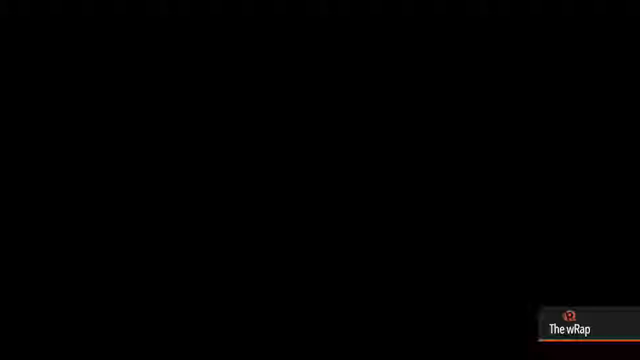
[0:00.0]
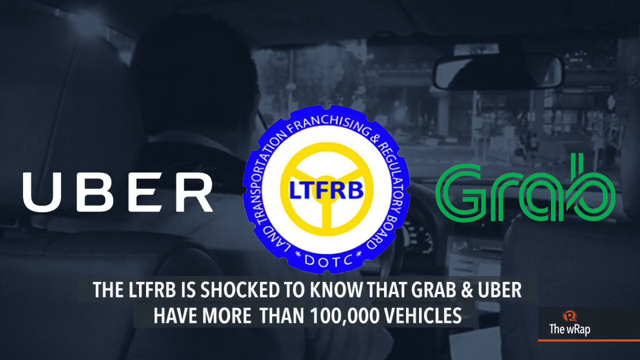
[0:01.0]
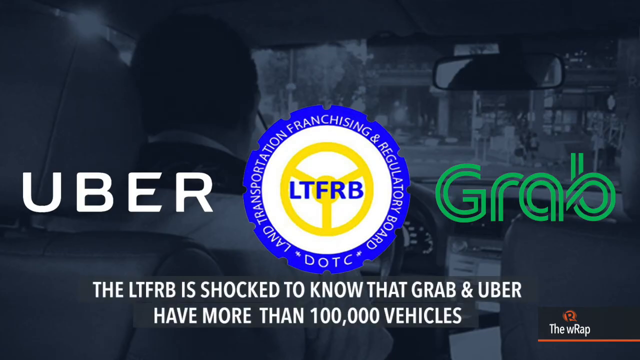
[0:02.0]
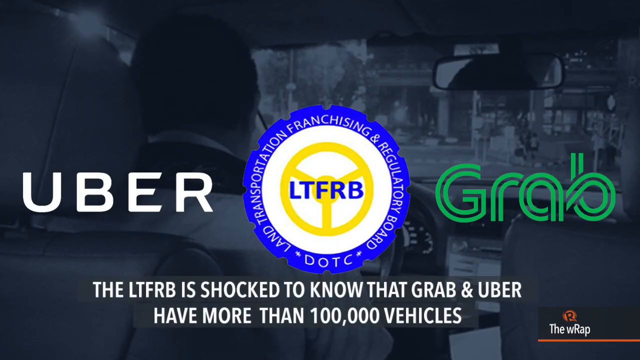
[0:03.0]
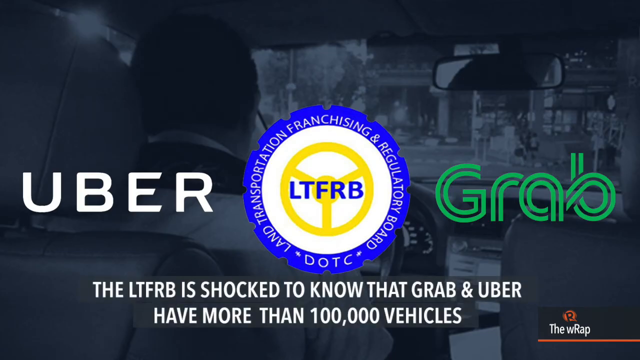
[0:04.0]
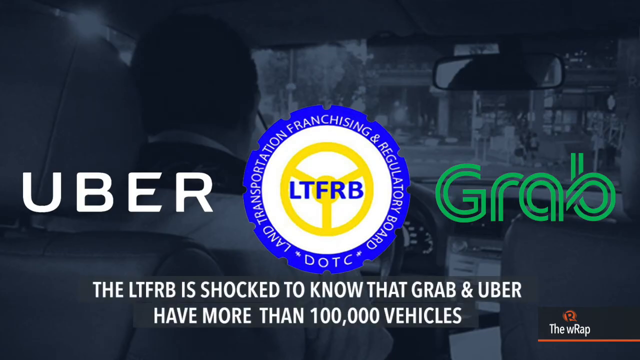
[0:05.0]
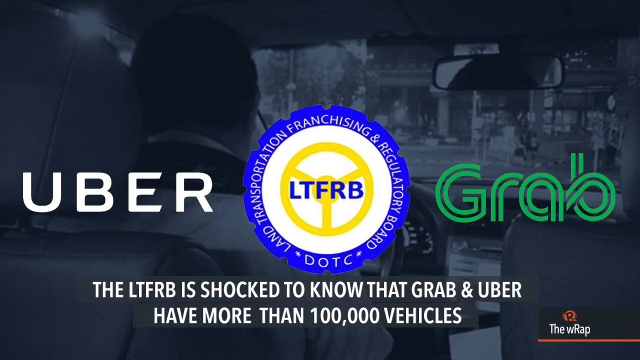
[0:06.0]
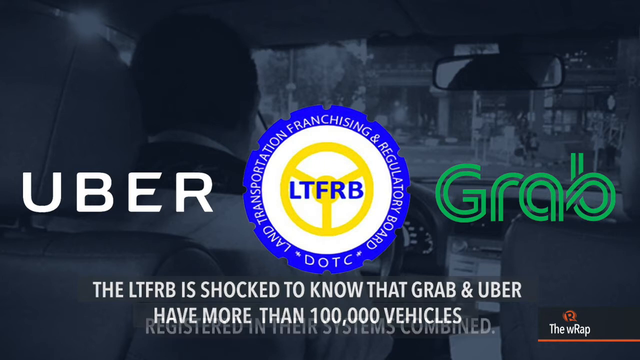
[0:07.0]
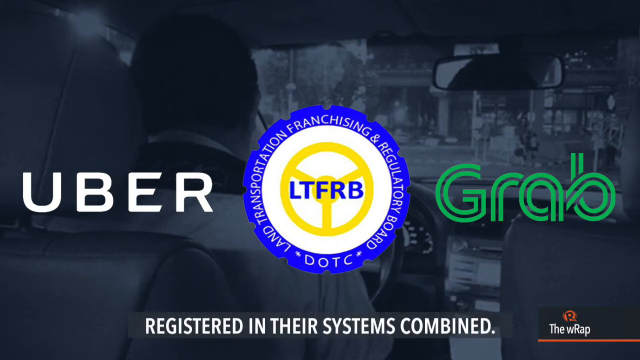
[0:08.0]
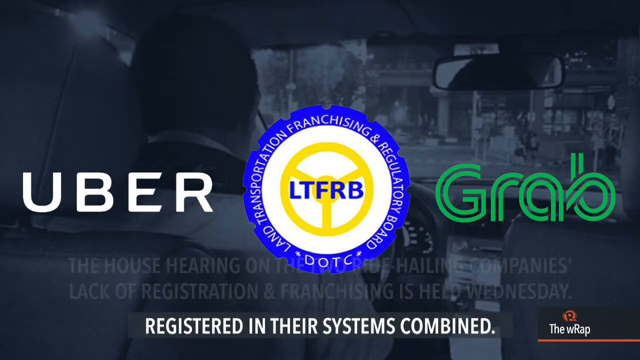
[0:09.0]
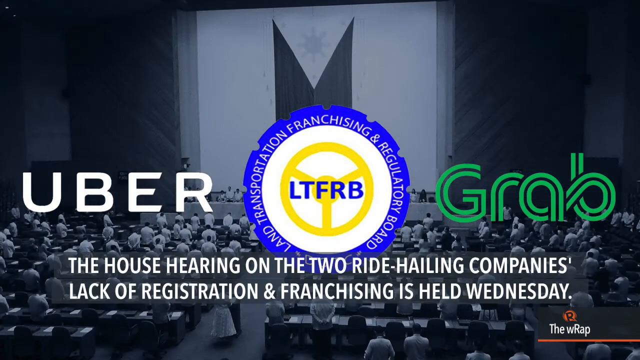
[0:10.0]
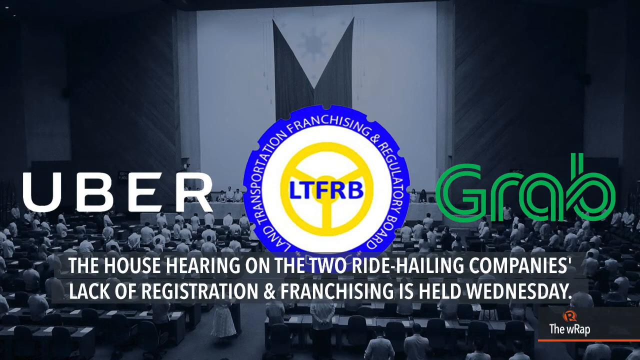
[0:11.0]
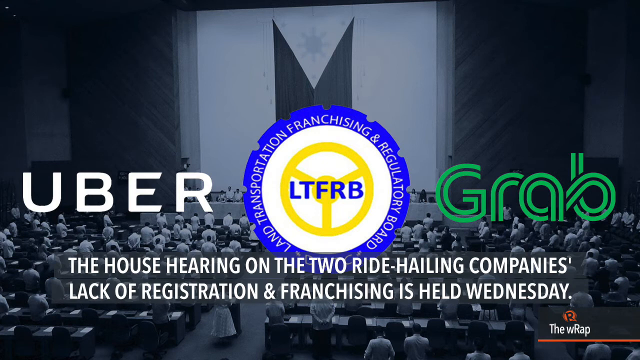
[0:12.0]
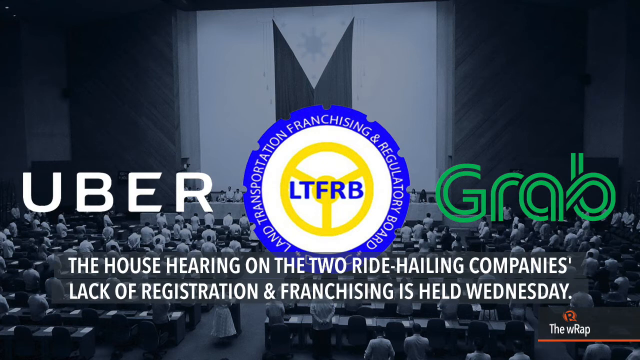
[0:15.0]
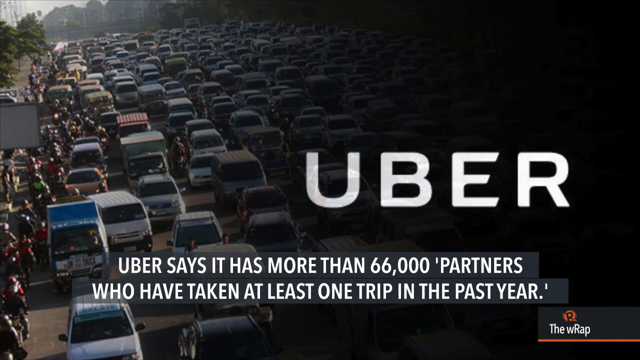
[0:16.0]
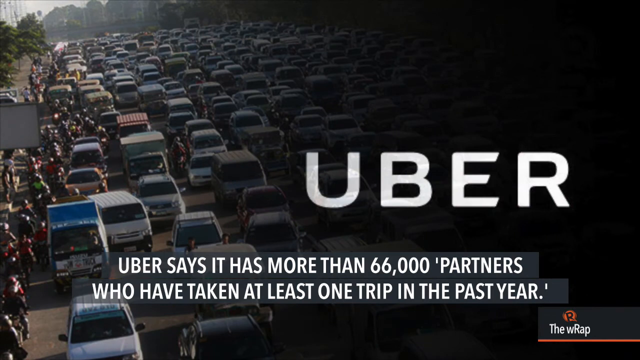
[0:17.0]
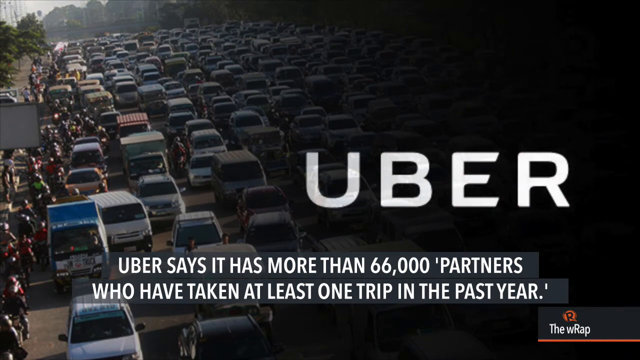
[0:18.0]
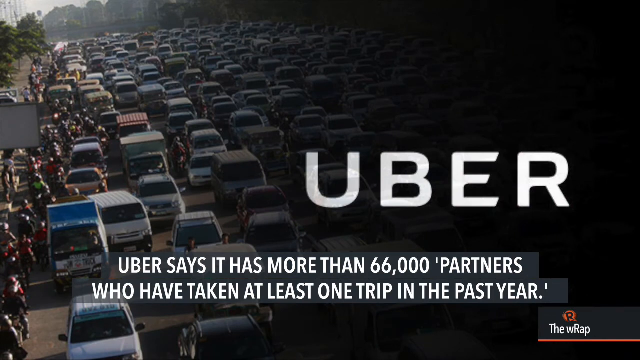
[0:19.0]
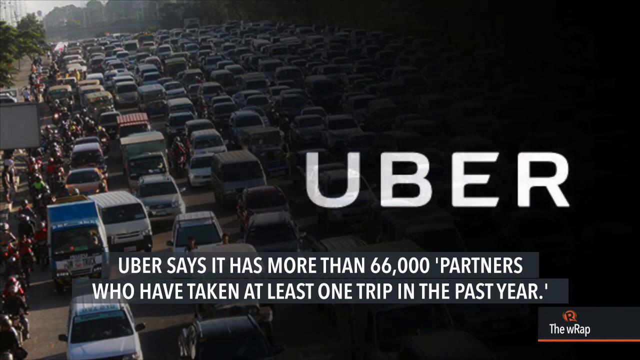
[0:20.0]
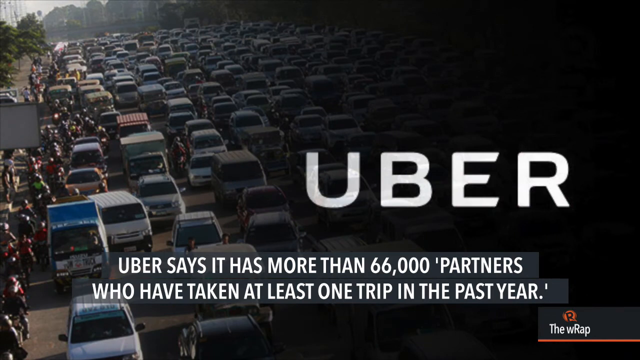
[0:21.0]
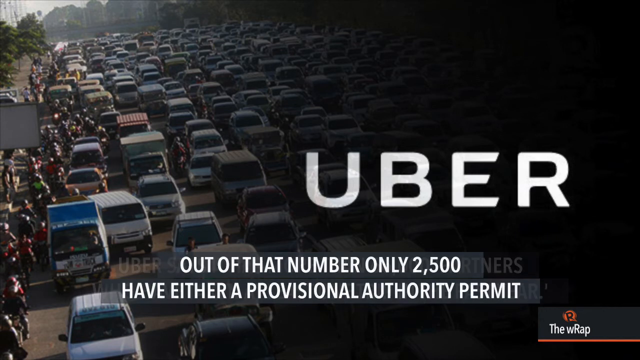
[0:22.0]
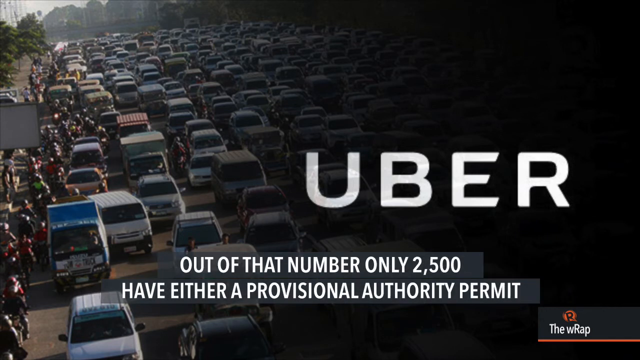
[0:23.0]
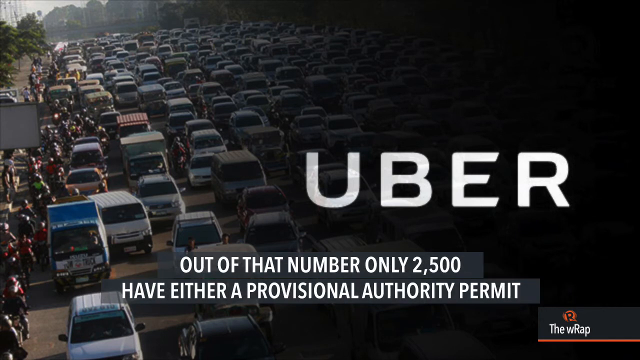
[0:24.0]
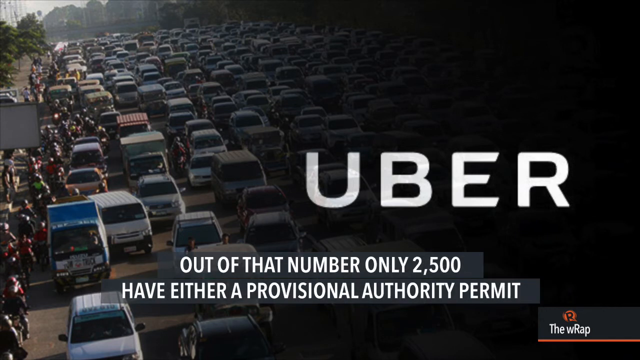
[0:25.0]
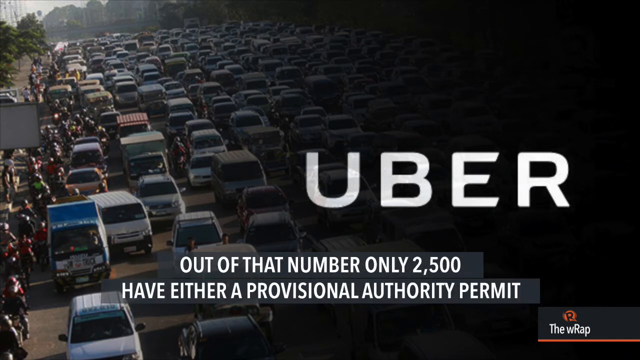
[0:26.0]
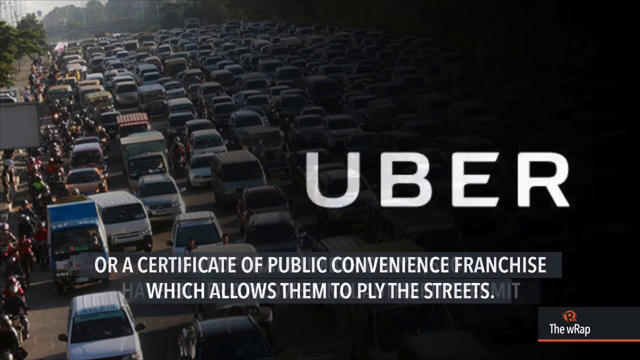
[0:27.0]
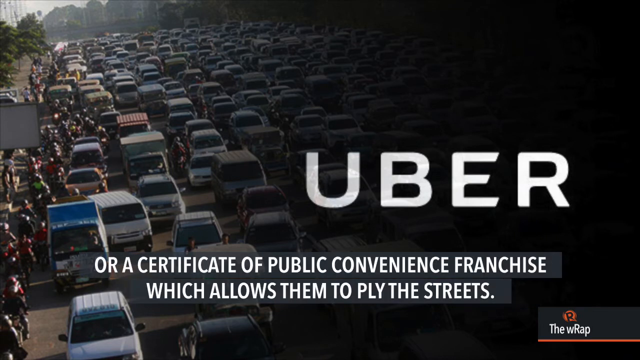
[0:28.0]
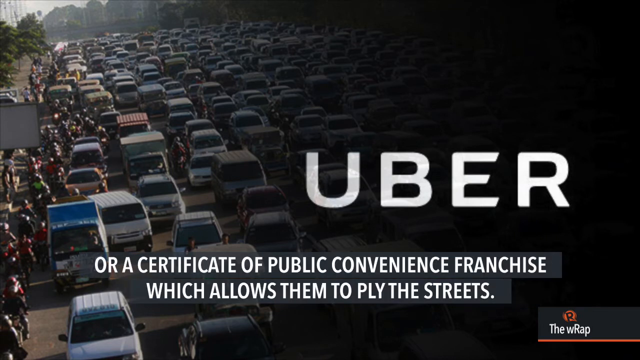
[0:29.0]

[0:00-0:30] The video concerns Uber and Grab and is titled "Uber Grab," with the word "Grab" written in green. An emblem of Uber Grab also appears.